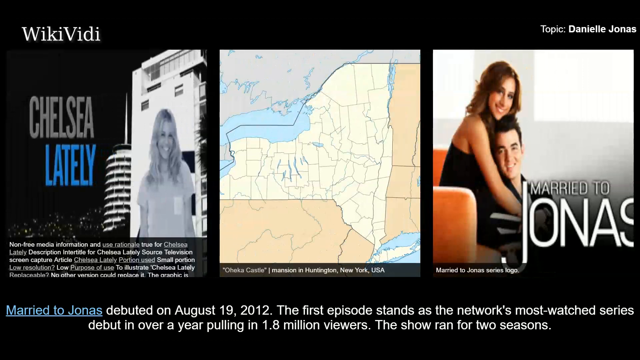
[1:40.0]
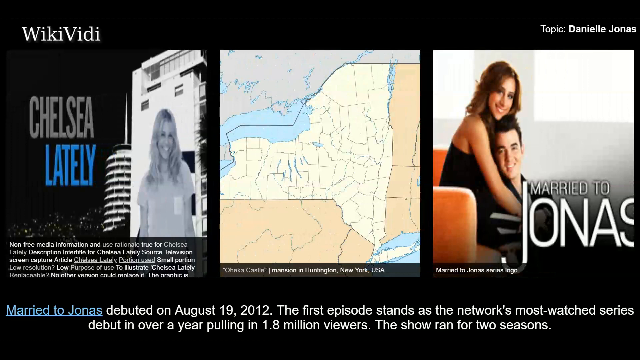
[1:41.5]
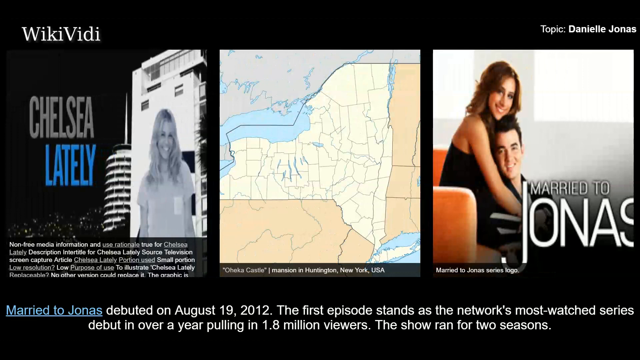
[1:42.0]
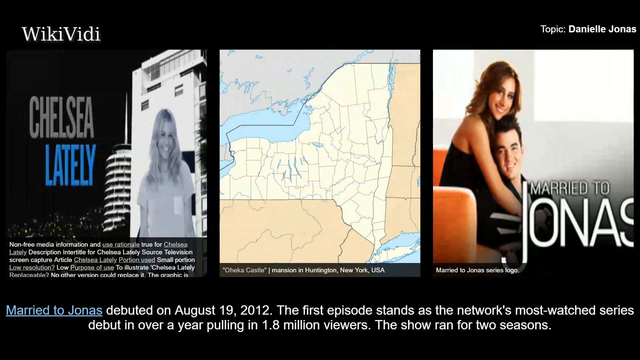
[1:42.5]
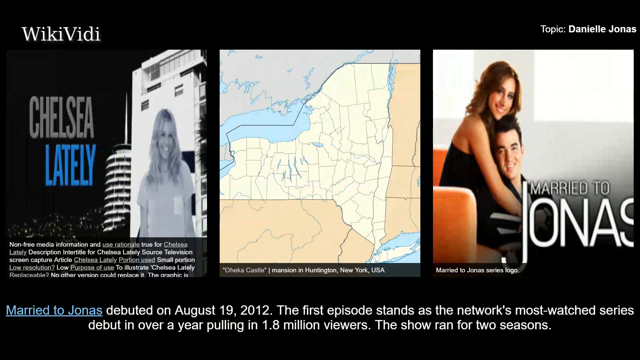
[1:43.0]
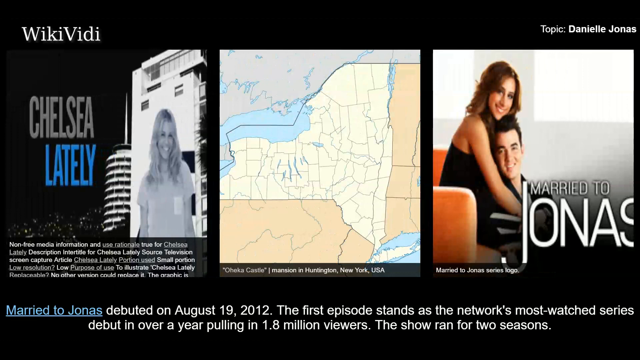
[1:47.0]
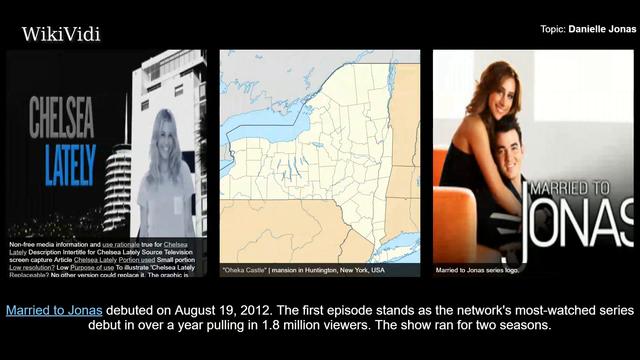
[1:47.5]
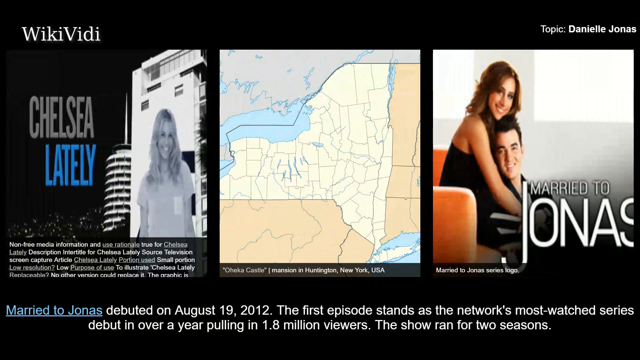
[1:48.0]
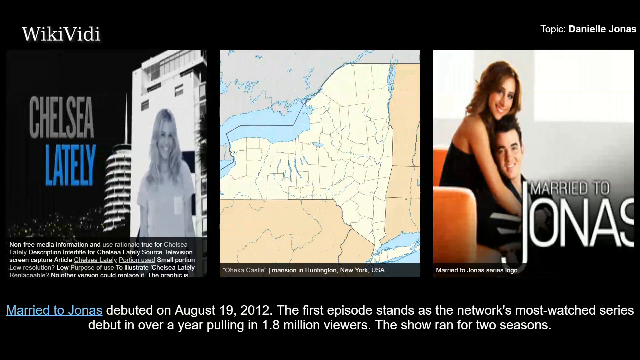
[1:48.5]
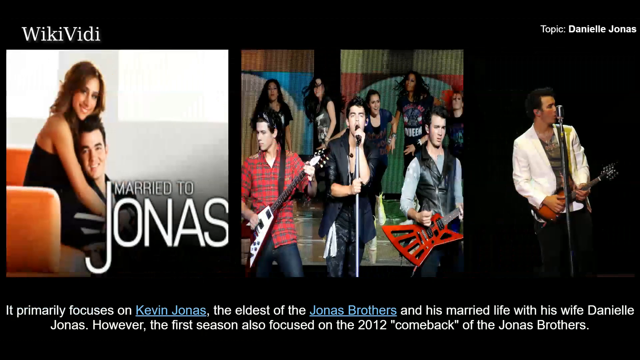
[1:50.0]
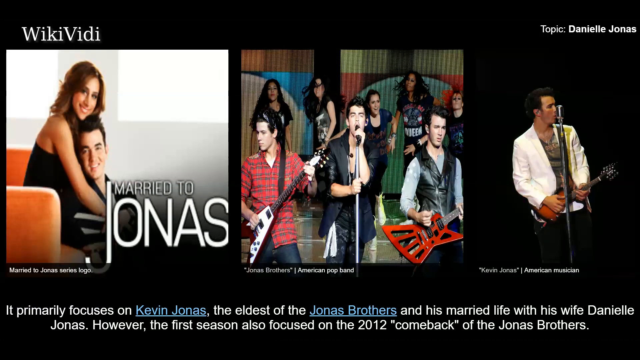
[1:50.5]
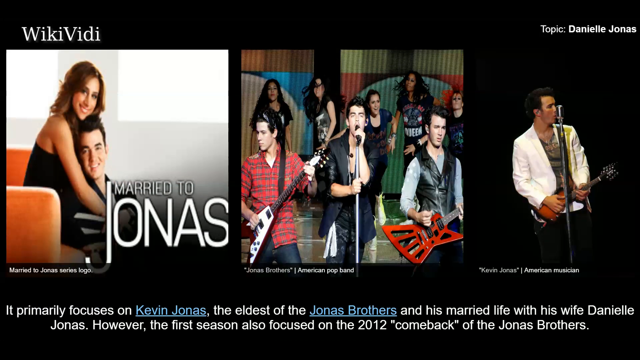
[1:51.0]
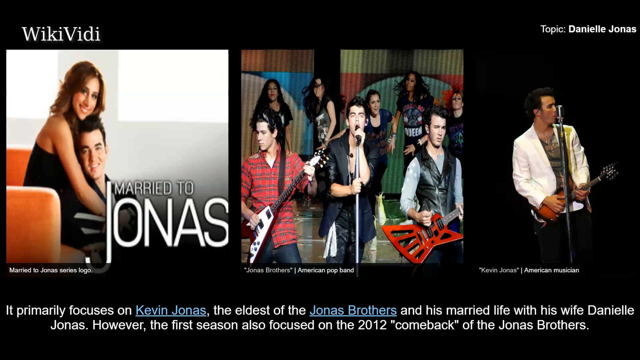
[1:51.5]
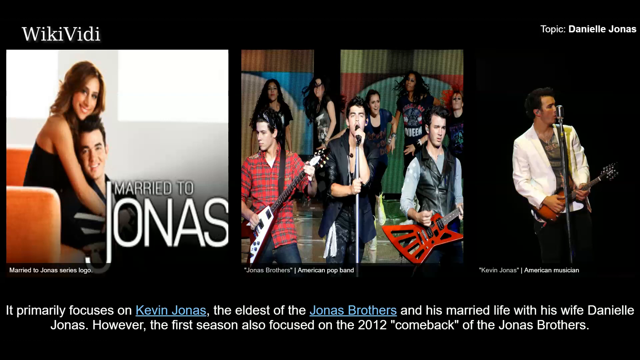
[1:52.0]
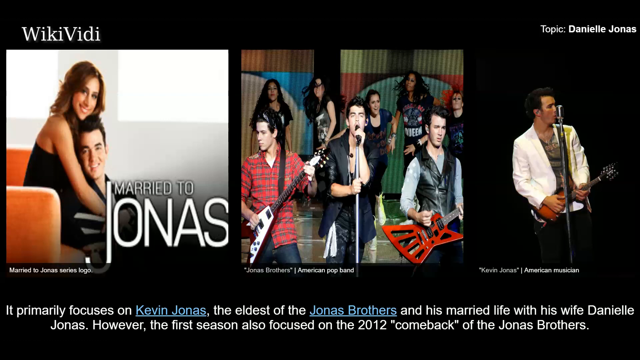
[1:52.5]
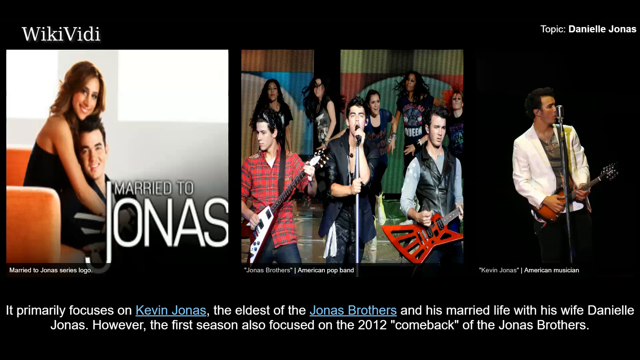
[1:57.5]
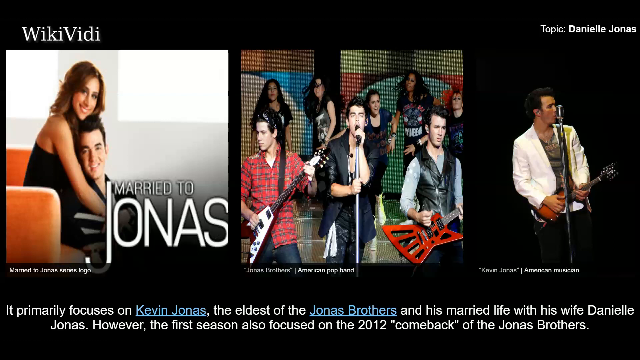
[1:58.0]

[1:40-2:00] The white paragraph at the bottom is about the Married to Jonas show; its first words, "married to Jonas," are in blue text as a hyperlink, and the rest is white. The paragraph is then replaced with a different one. The pictures also change: the Married to Jonas graphic moves from the far right to the far left, and two different pictures appear, the middle one showing the Jonas Brothers performing on stage and the far-right one showing Kevin Jonas performing on stage, each labeled at the bottom in very small white text. The new paragraph says that the show focuses primarily on Kevin Jonas, the eldest of the Jonas Brothers, and that the first season also focused on the 2012 comeback of the Jonas Brothers and on Kevin's wife, Danielle.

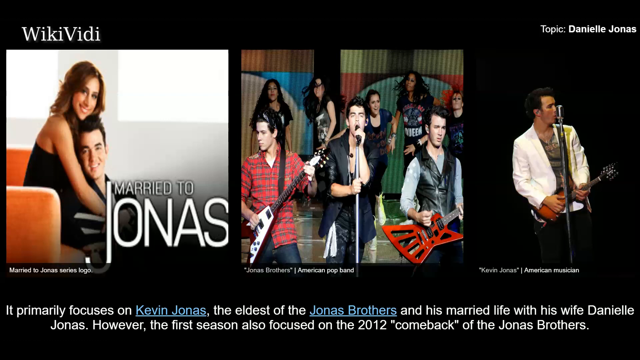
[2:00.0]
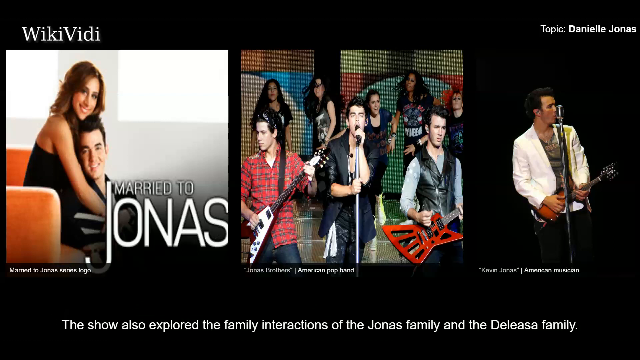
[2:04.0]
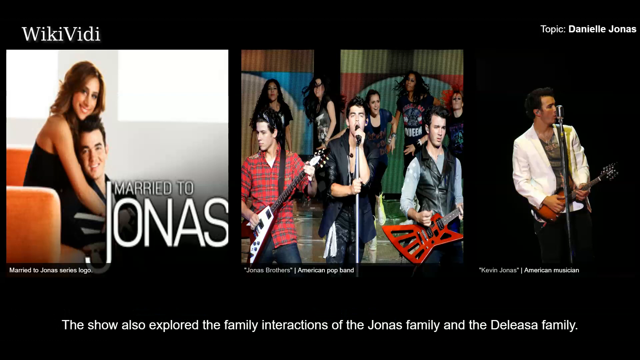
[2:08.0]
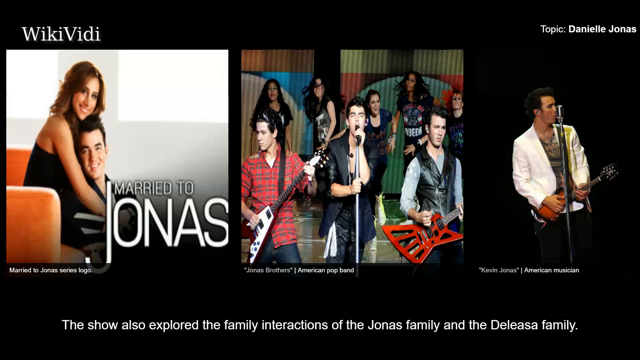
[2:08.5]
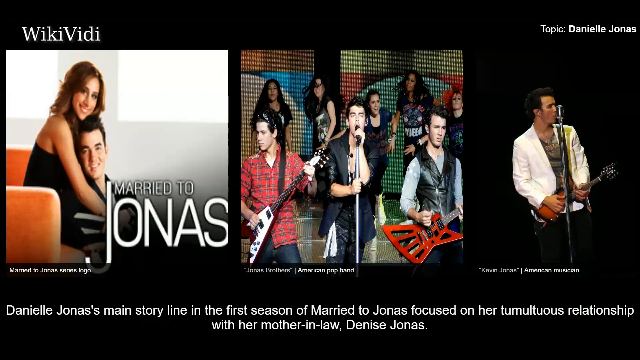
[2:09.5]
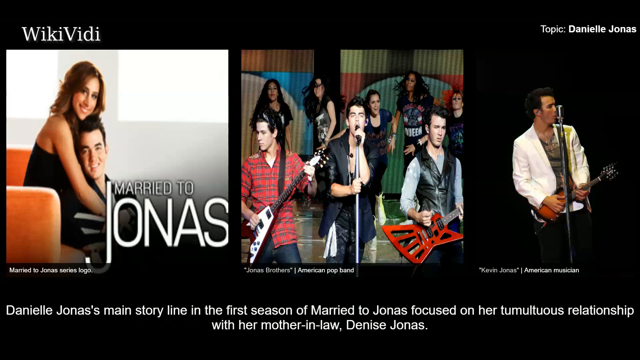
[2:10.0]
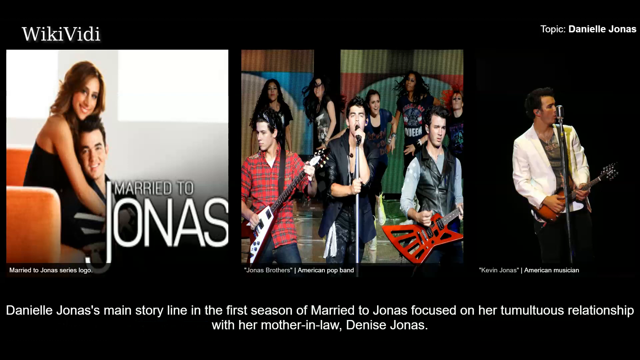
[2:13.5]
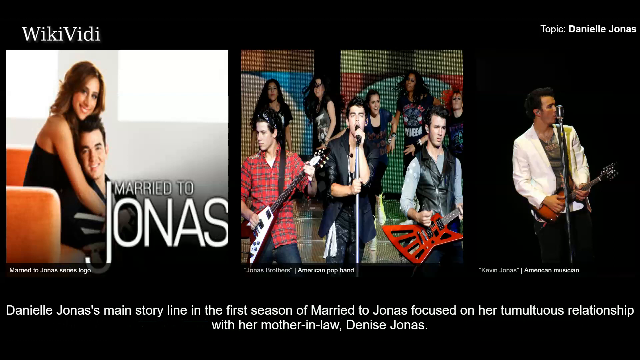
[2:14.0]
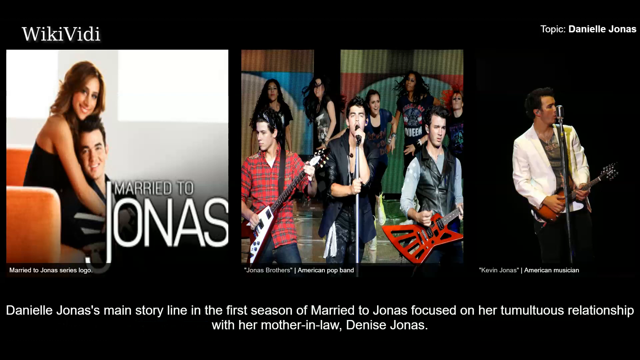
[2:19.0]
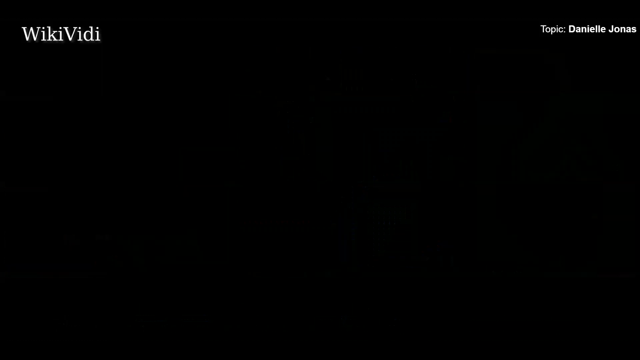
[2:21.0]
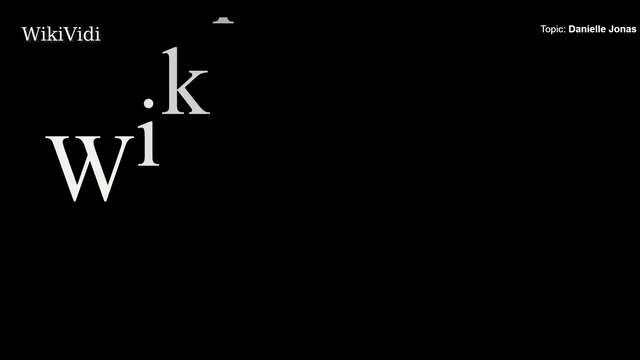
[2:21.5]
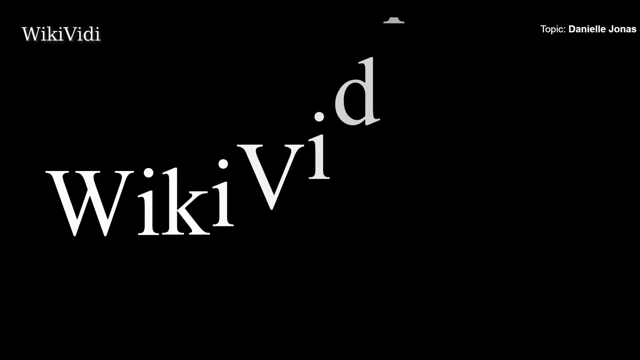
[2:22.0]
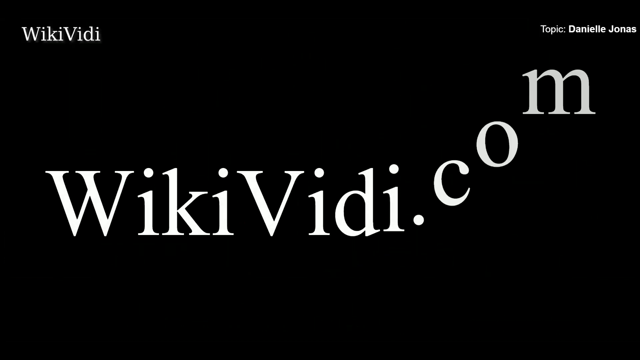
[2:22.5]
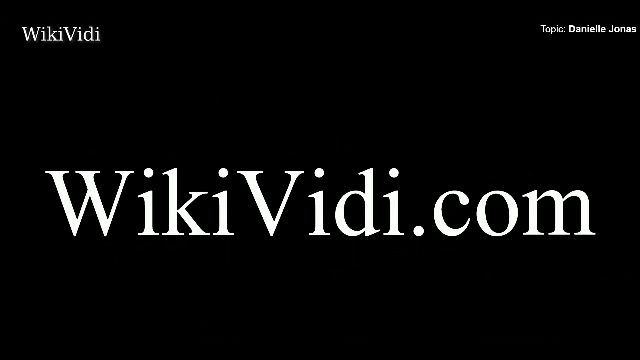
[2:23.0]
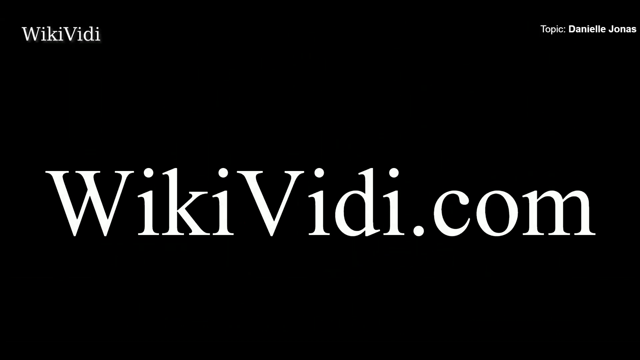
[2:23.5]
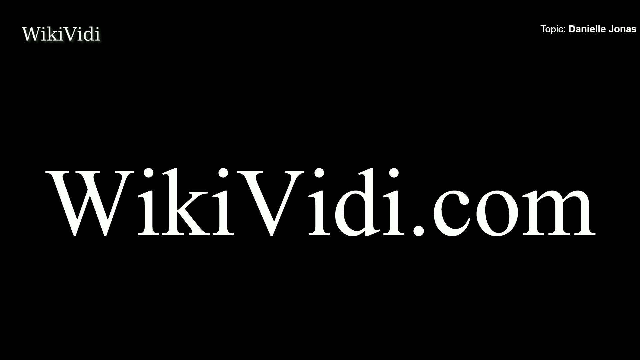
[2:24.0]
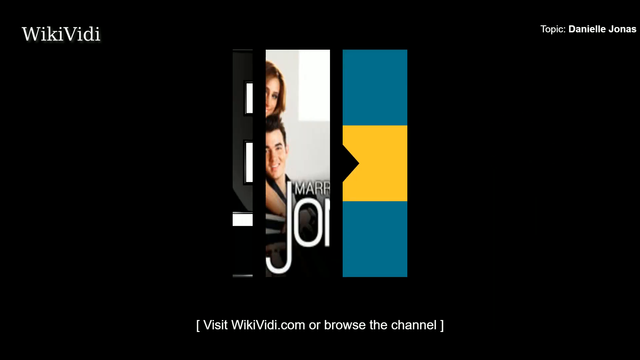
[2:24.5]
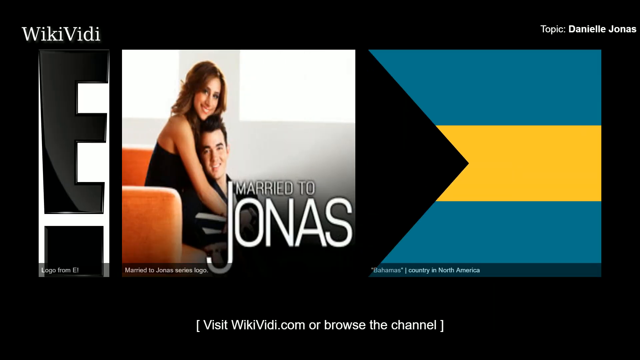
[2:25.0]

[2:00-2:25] Three images over the middle of the black background show the Jonas Brothers, with the Married to Jonas TV show graphic on the far left. Shortly after, the white text at the bottom is replaced by a new white sentence: "the show also explored the family interactions of the Jonas family and the Deleasa family." The three images do not change when this sentence appears. Another new sentence then replaces it, about the main storyline, saying the first season focuses on the tumultuous relationship between Danielle's mother-in-law, Denise Jonas, and Danielle. At the very end, the three images and the white text disappear, and the black background takes up all of the video until large white text reading "wikividi.com" appears over it.